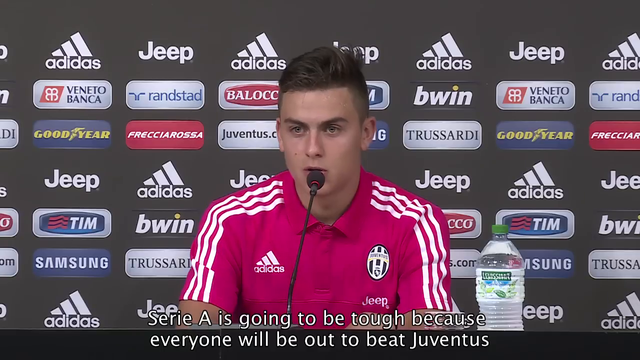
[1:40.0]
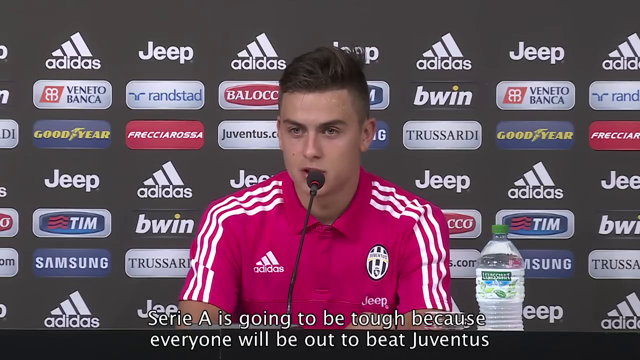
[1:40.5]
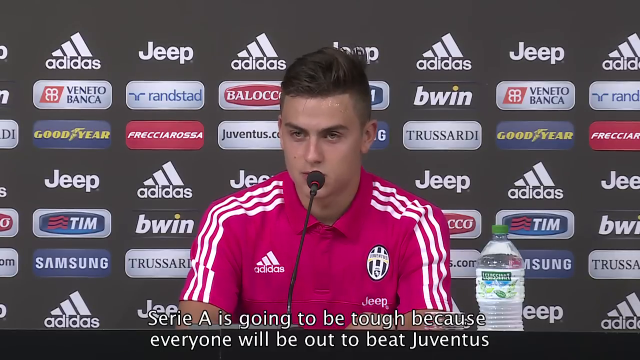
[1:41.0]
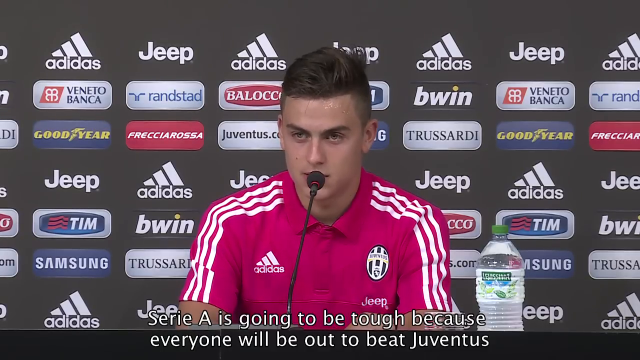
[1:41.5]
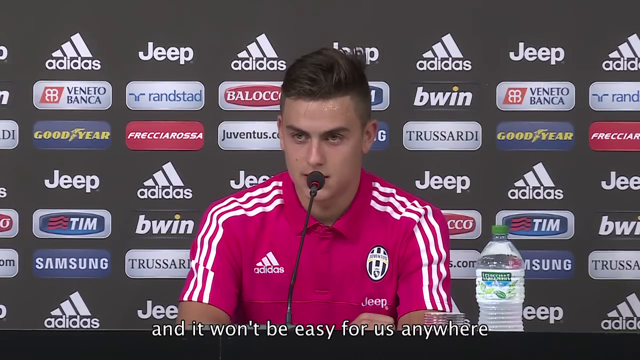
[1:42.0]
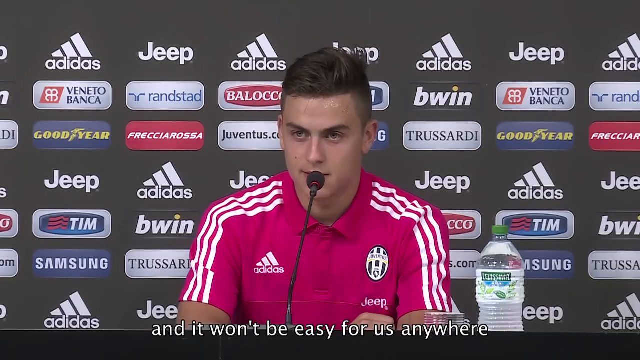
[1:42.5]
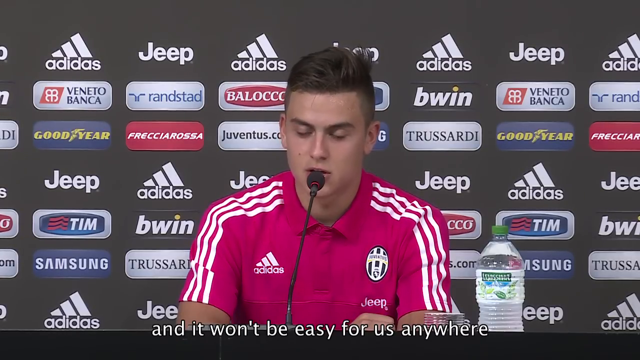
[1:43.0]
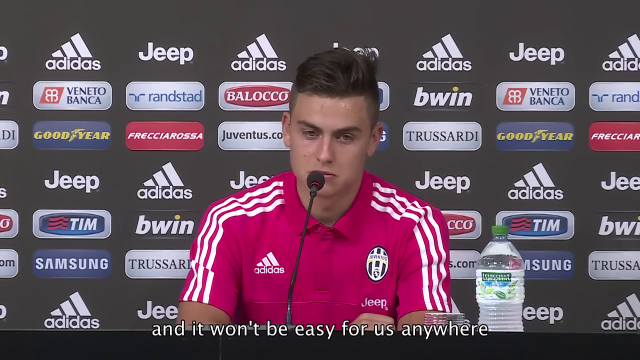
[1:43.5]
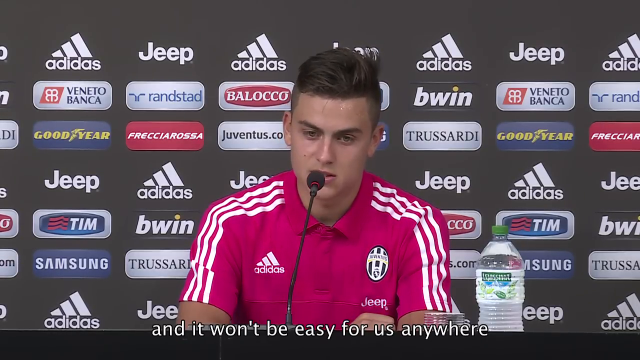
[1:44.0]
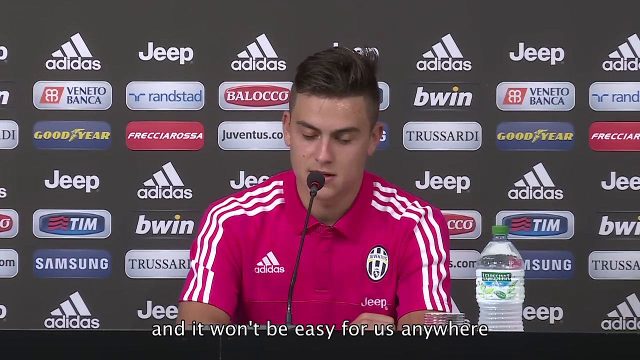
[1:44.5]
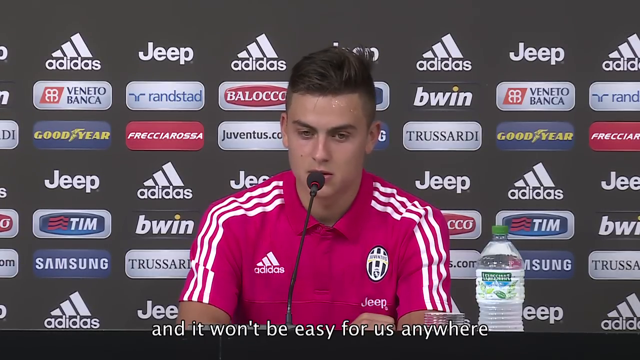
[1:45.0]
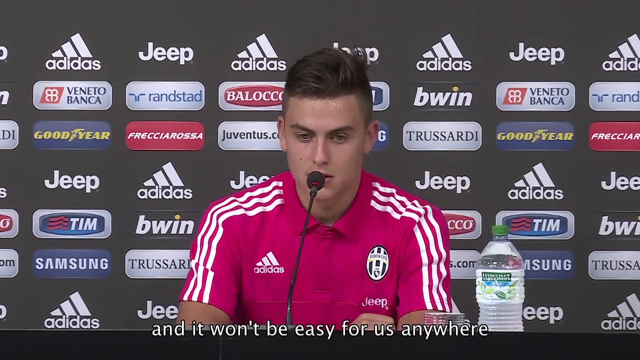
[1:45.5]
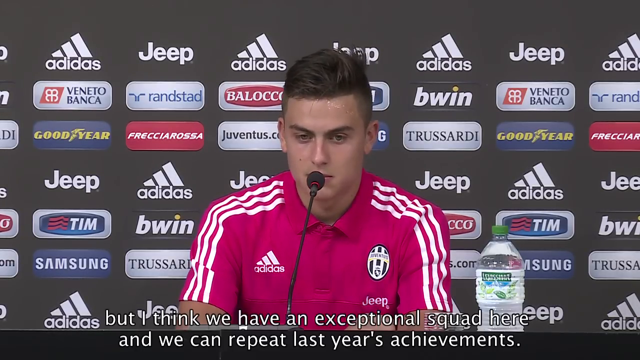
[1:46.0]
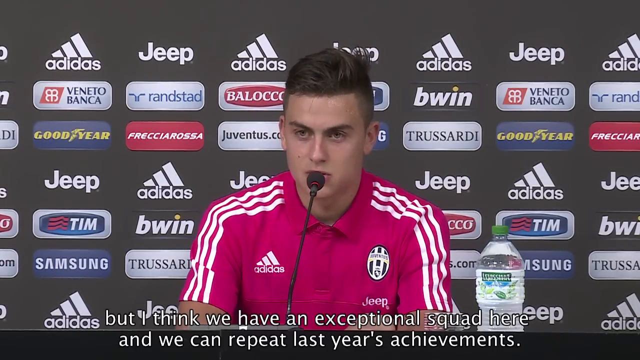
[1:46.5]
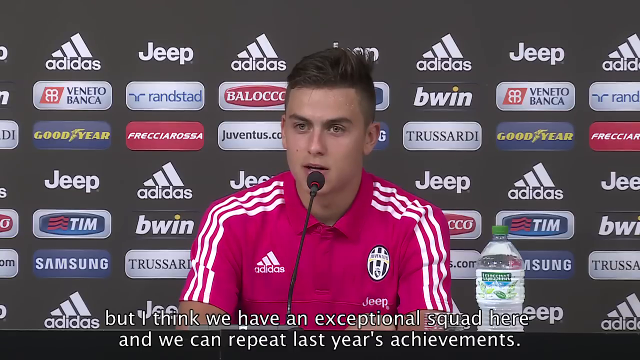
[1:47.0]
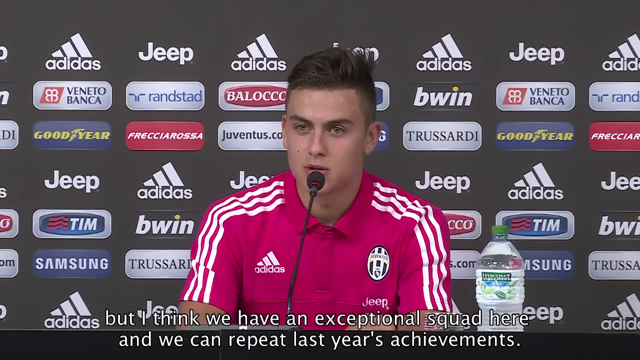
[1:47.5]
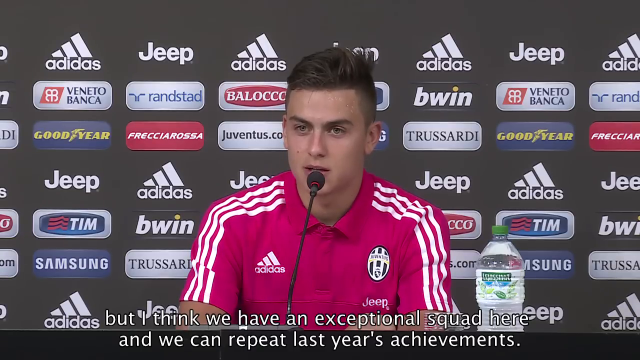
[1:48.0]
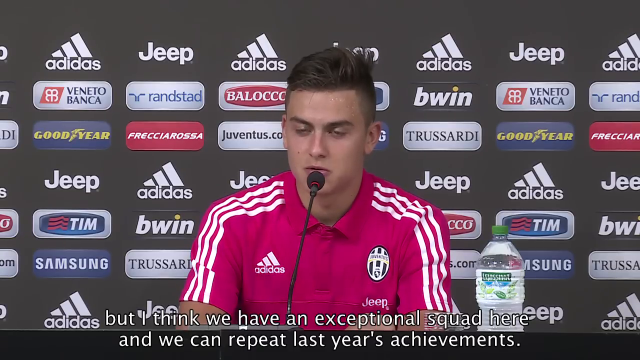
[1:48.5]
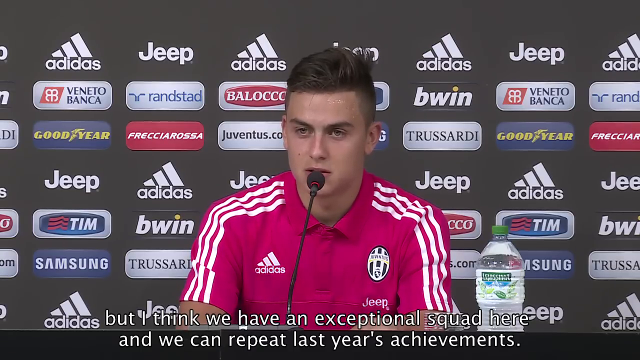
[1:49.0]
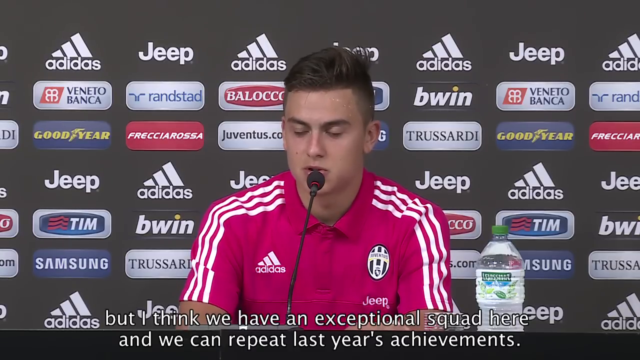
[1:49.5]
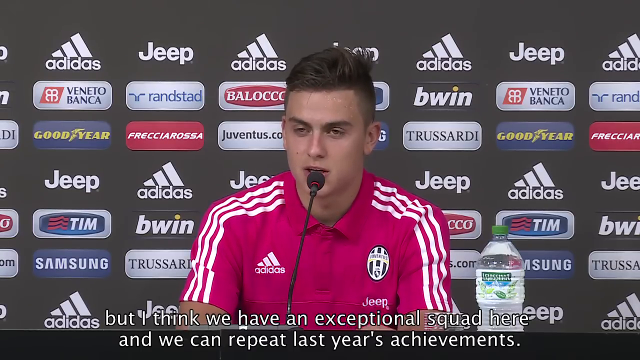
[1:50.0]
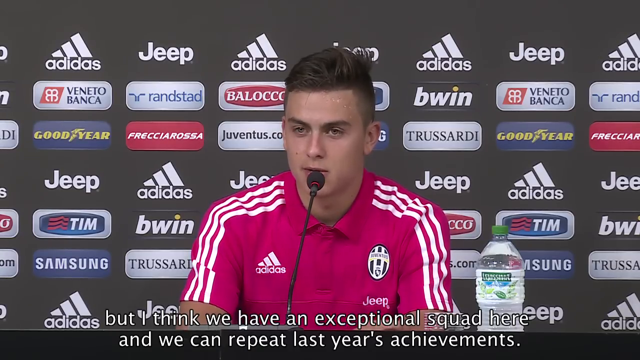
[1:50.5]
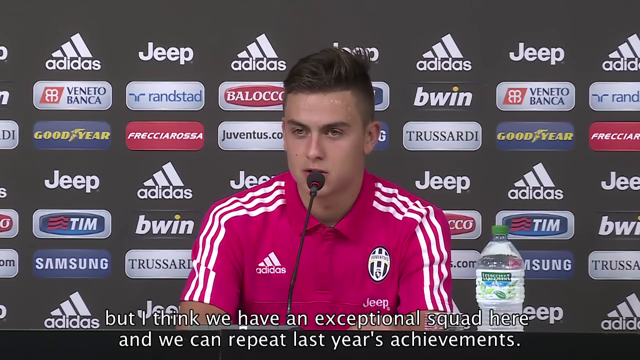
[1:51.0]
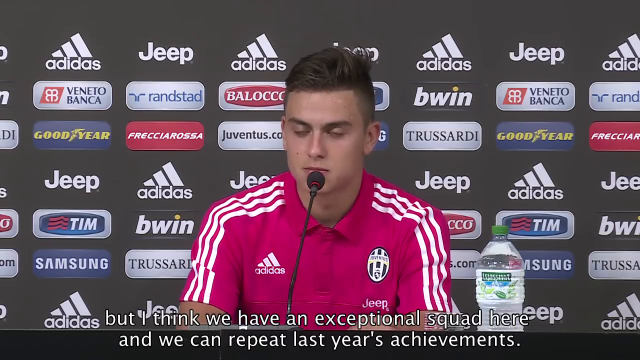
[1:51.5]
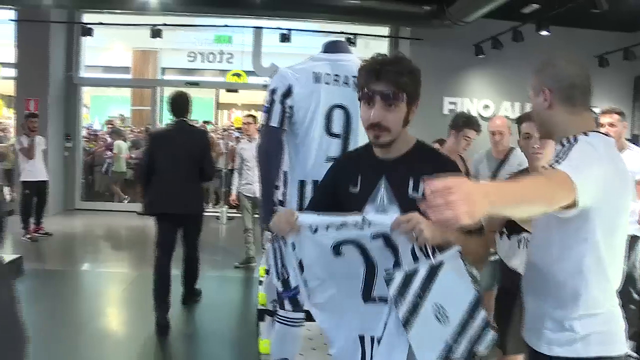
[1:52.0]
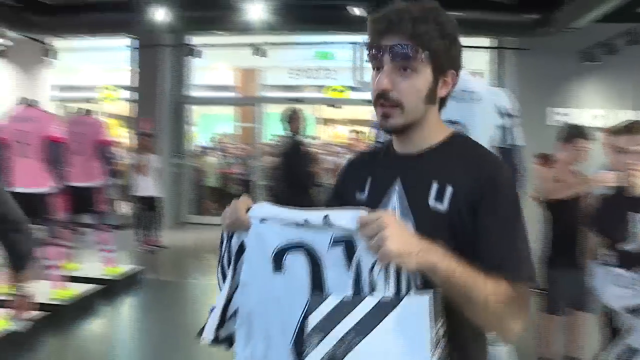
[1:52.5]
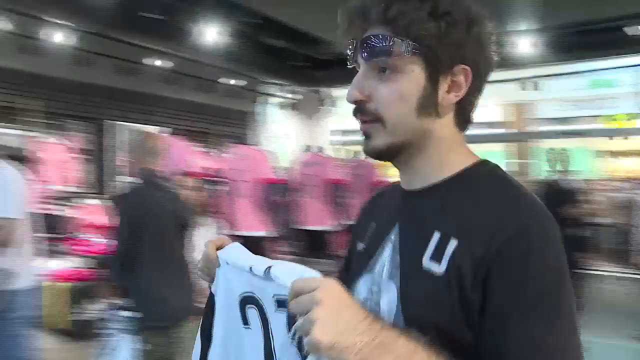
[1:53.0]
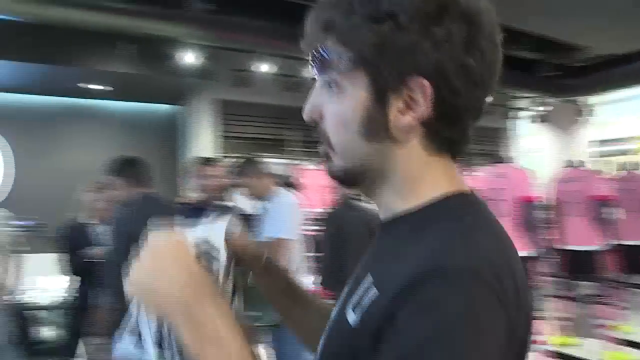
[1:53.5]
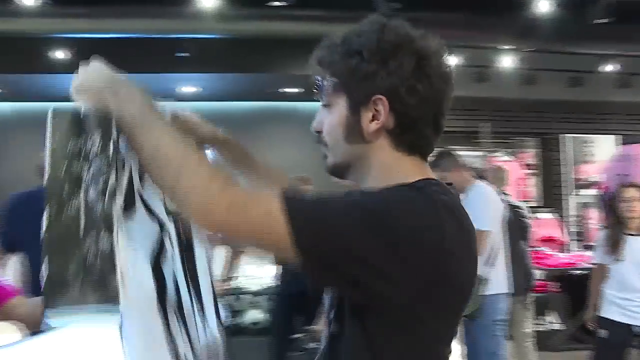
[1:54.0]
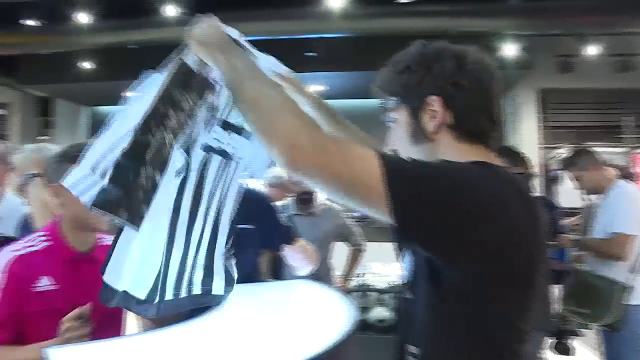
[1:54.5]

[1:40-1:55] He answers questions, and more sweat is visible on the top left side of his forehead, though he looks more calm as he speaks. Several fans walk up to him to get their jerseys signed; many appear to be smiling, and he smiles as he signs autographs. Several staff members in the background help, either moving the line or keeping fans from getting too close.